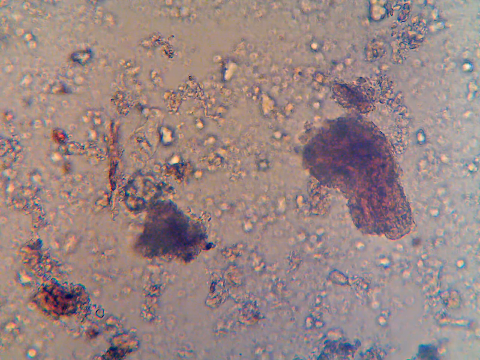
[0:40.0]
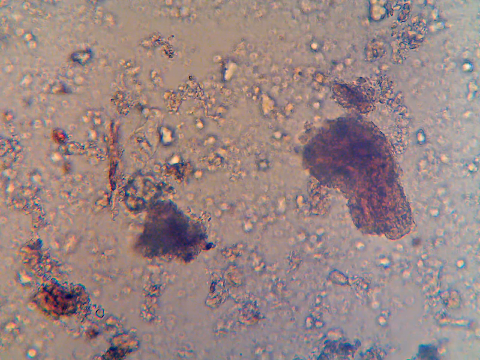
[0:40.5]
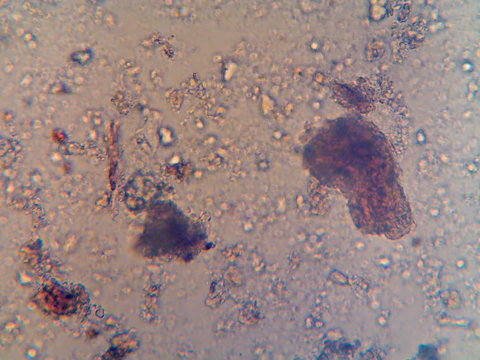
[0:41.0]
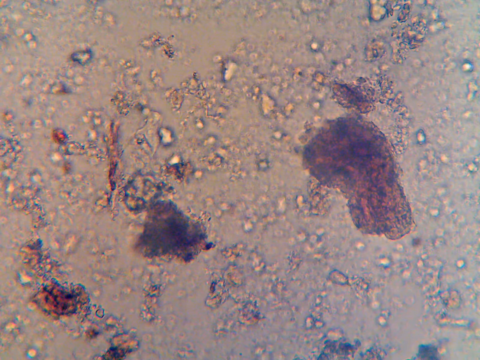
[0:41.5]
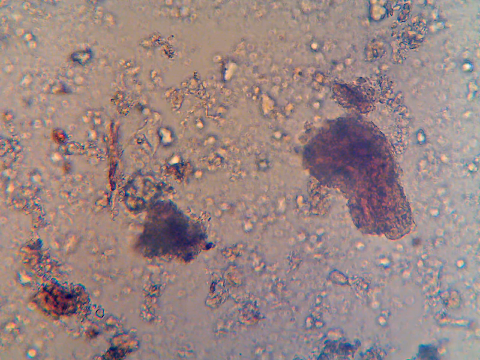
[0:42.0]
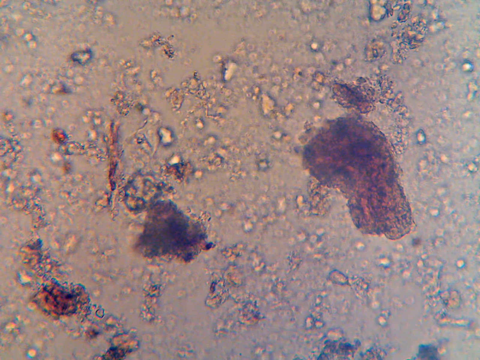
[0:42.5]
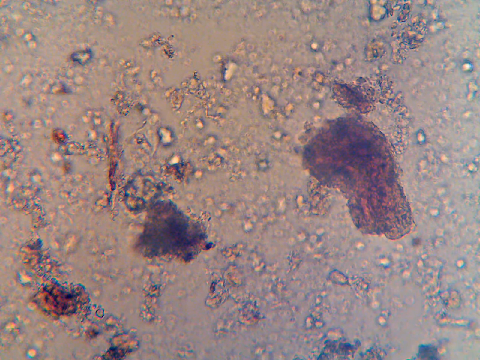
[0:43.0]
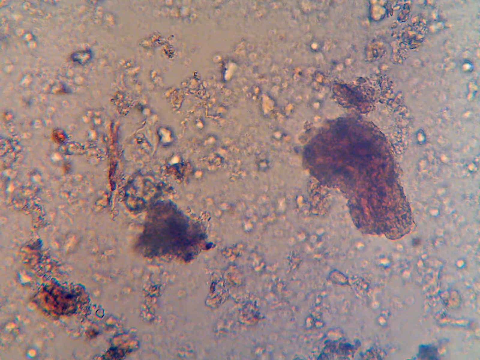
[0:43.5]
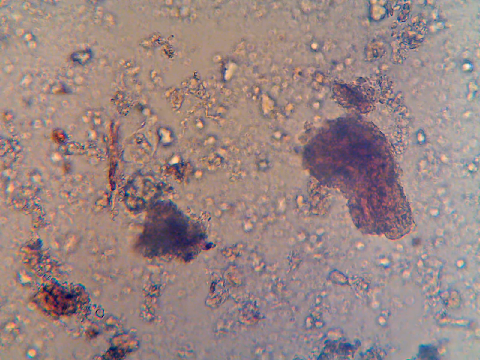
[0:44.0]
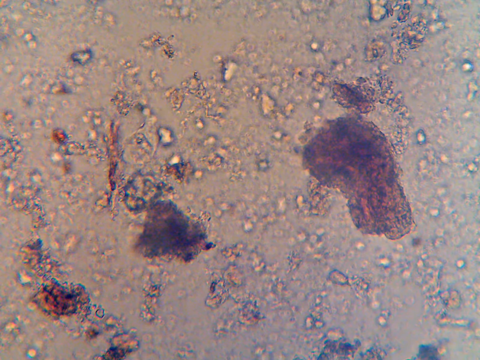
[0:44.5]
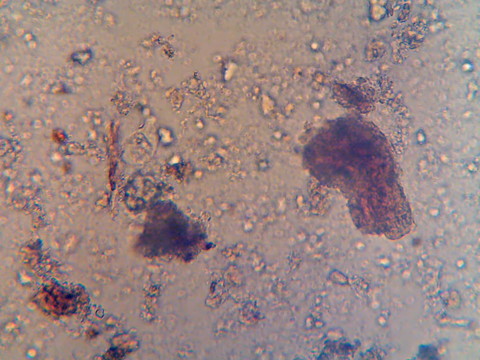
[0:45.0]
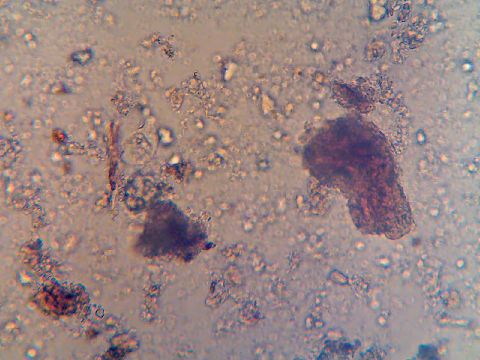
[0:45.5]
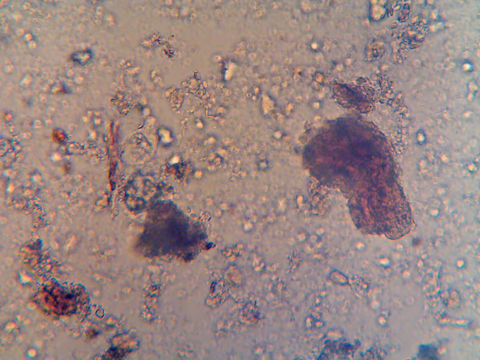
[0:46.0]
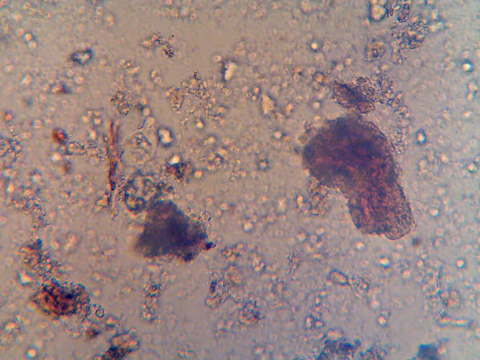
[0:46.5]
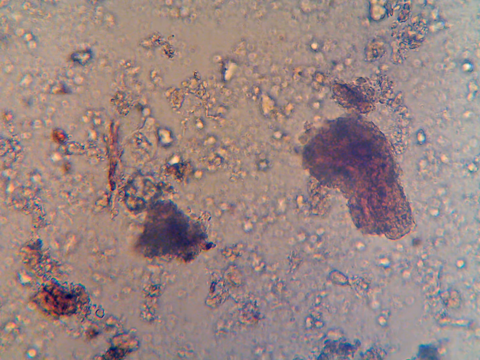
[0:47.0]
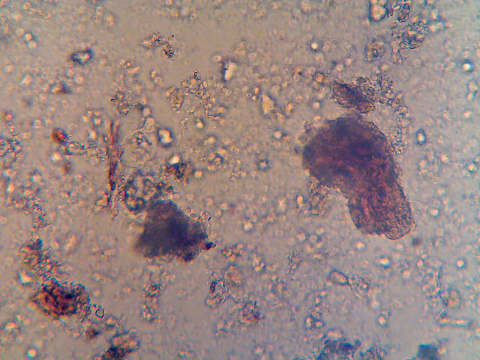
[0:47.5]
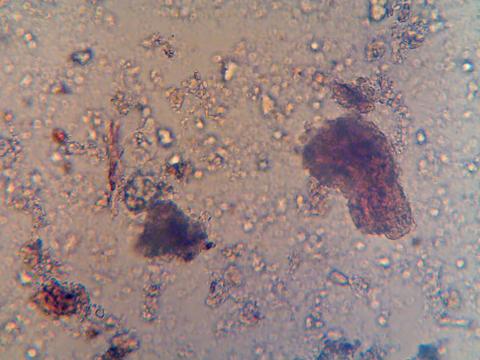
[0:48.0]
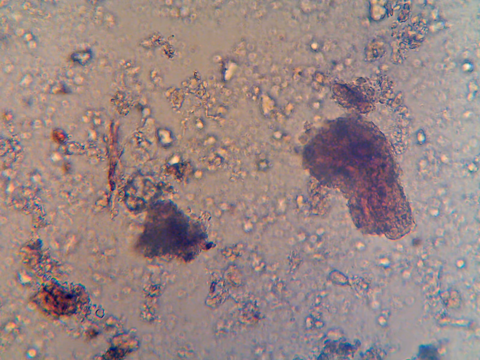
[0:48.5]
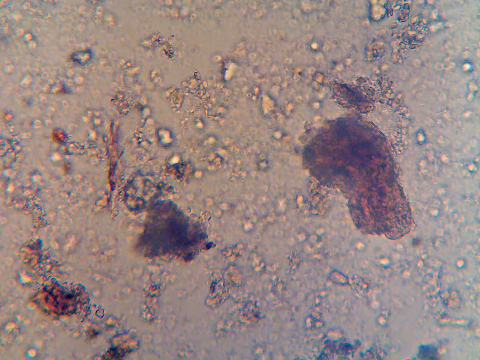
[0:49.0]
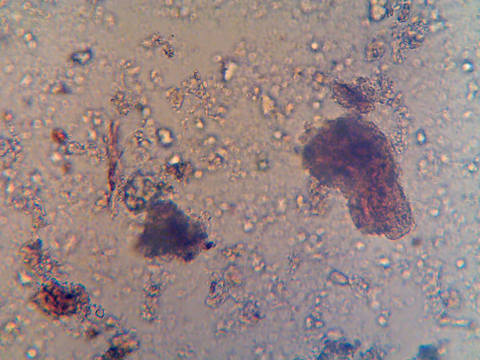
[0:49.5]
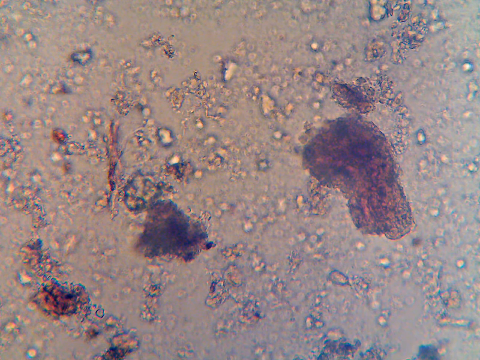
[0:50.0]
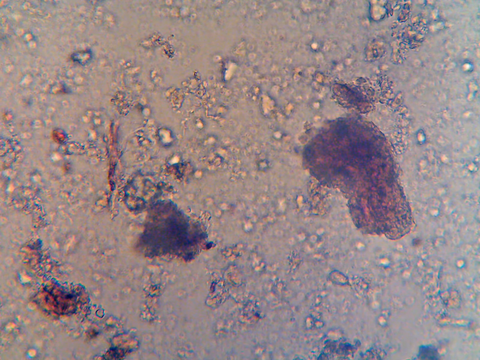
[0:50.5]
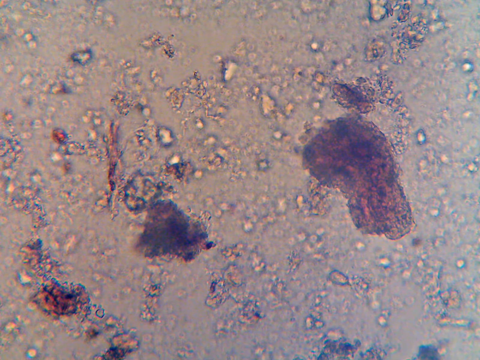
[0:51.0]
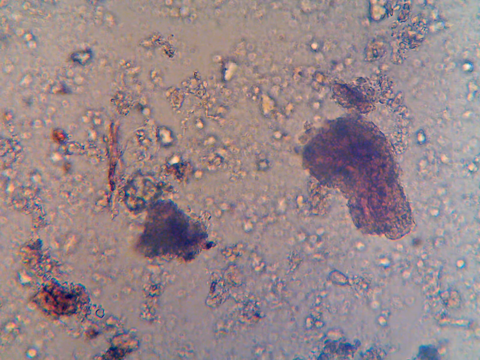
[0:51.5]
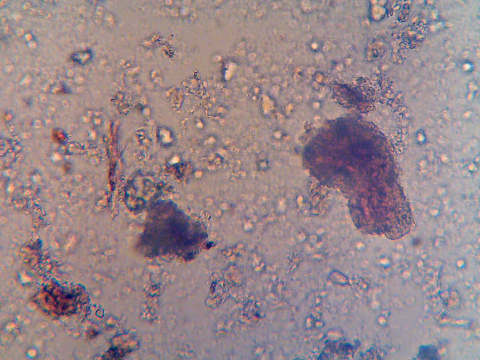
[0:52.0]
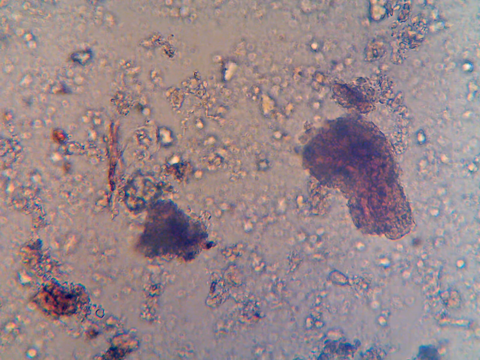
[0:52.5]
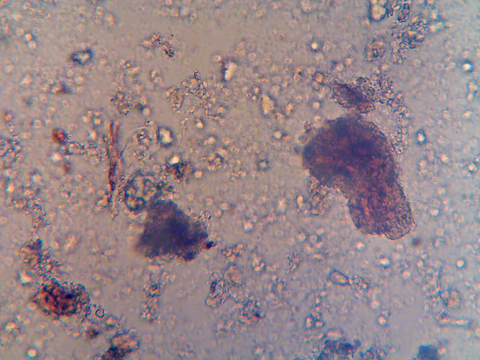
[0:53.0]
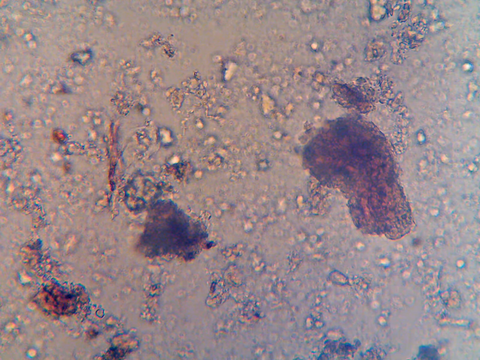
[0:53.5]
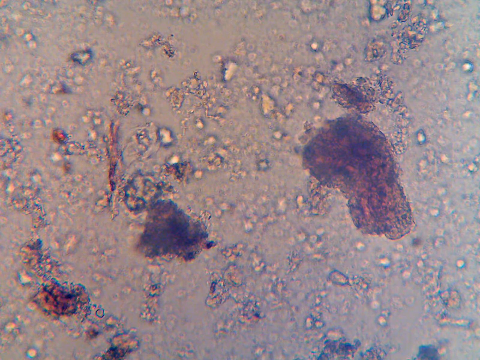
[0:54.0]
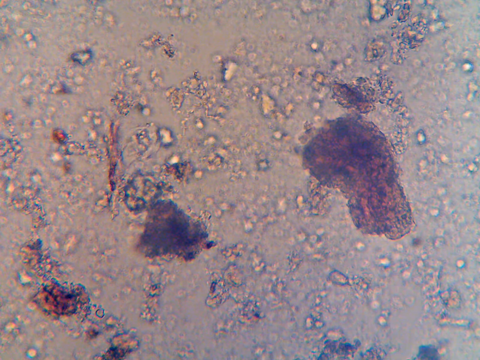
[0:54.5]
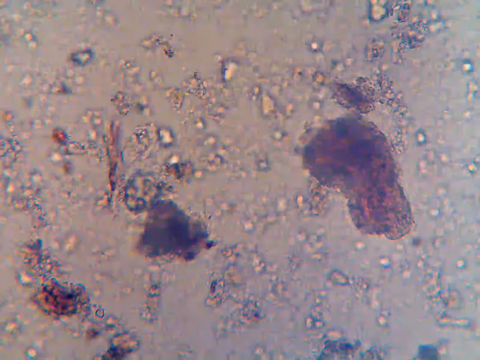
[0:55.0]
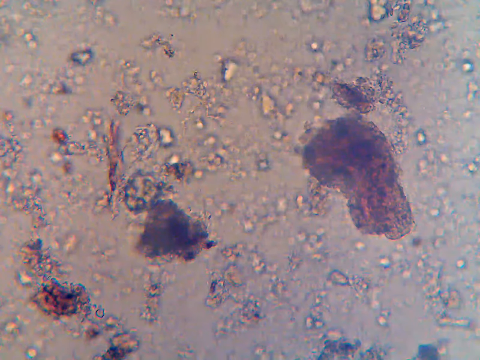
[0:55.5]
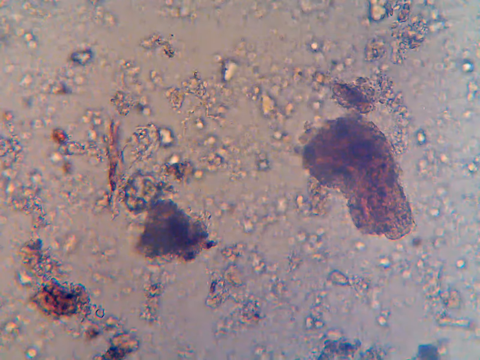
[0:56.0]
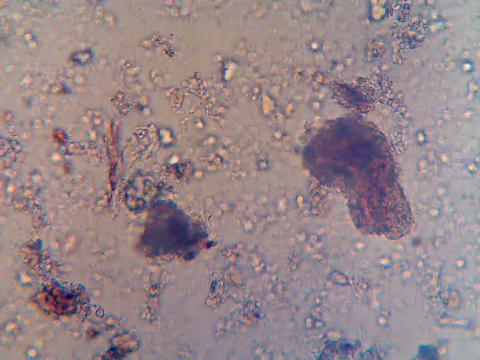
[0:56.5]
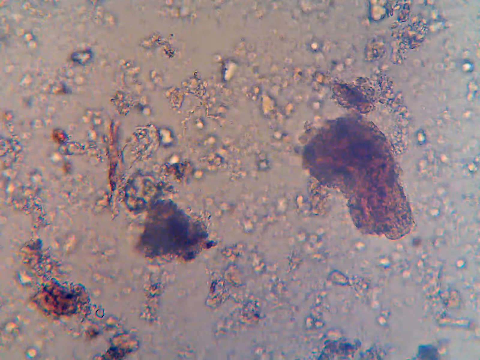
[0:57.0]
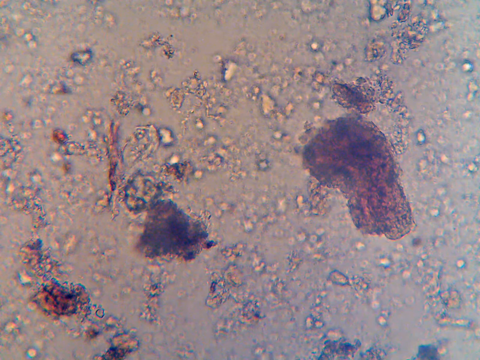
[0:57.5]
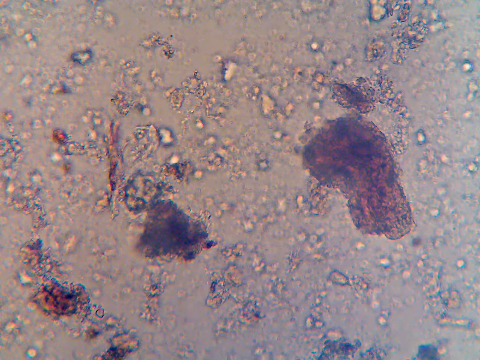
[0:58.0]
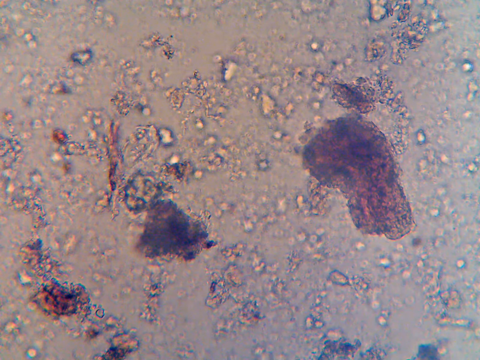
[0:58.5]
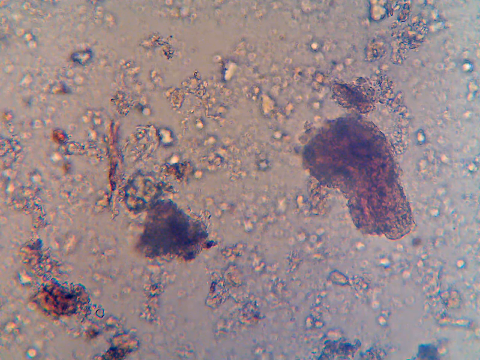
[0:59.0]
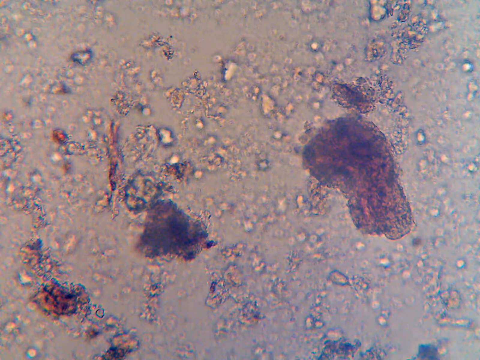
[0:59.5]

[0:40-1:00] What appears to be an electronic microscope views a sample, and it is unclear whether anything in the sample actually moves or whether the focus varies slightly. The background is a brown, beige-gray color with many blobs in it. Most of the blobs are of similar size, quite round, and not very different in color from the background. Three larger blobs have a distinct color. At the bottom left is an area of black and almost orange; this is the smallest of the three. Slightly left of center and slightly below center is a more triangular blob in a black-purplish color. In the central area toward the right of the screen is the largest blob, more than twice the size of the triangular blob and probably five times the size of the first; it is also blackish purple, with maybe some orange or red, and looks like two circular areas joined in the middle. There is very subtle movement: the three big blobs do not move, but some of the other blobs seem to move slightly. Otherwise there is no change.